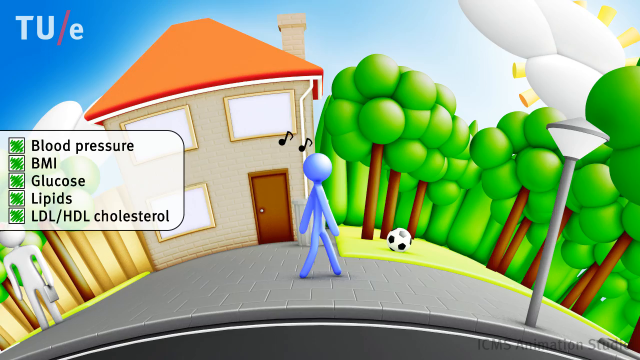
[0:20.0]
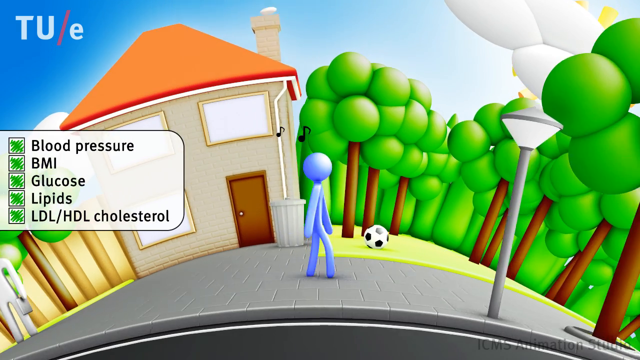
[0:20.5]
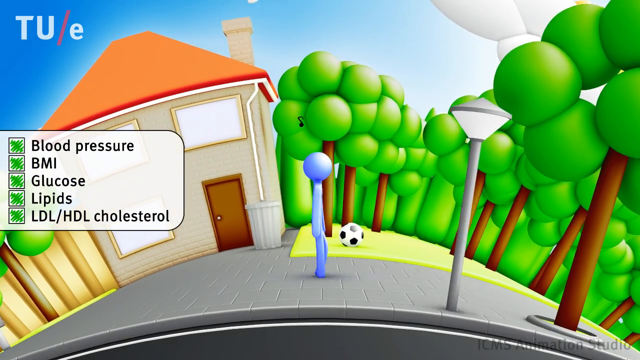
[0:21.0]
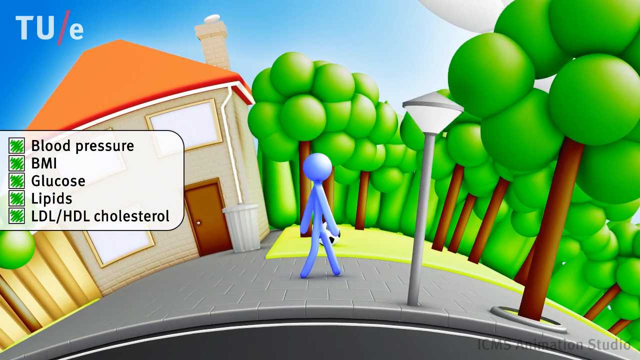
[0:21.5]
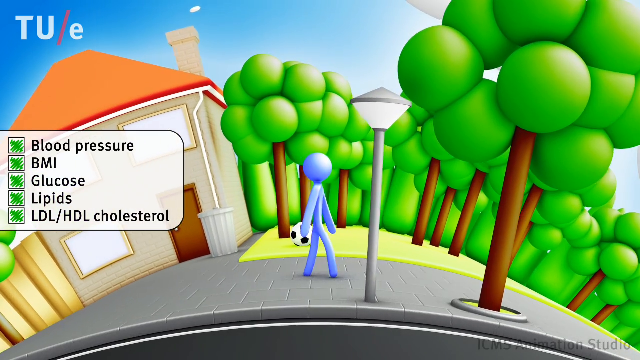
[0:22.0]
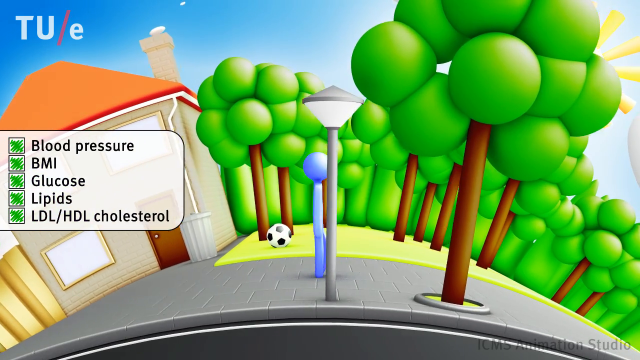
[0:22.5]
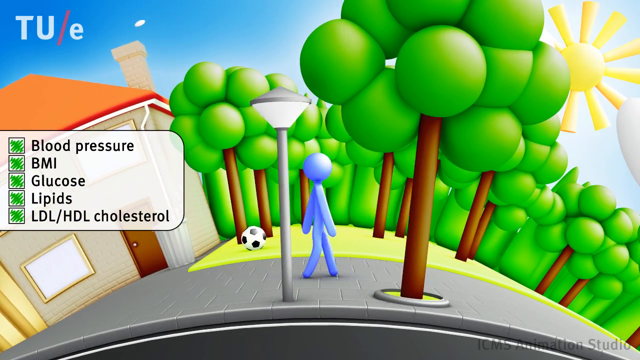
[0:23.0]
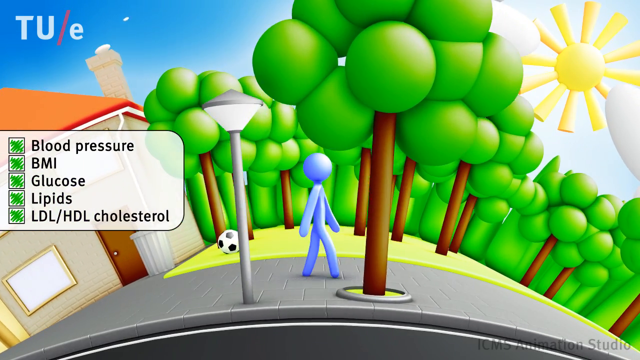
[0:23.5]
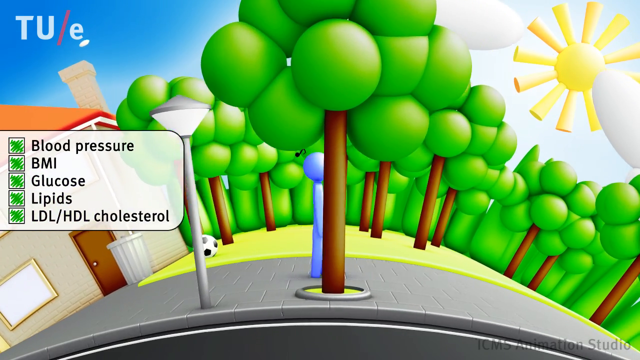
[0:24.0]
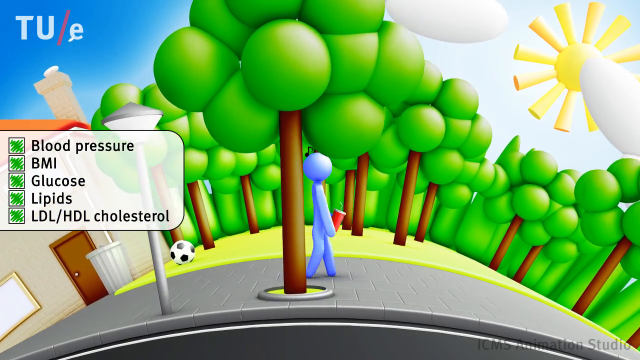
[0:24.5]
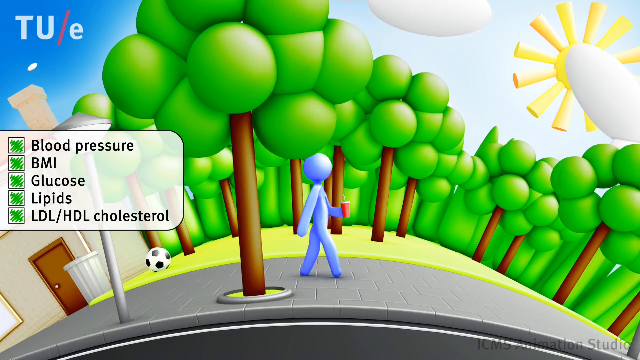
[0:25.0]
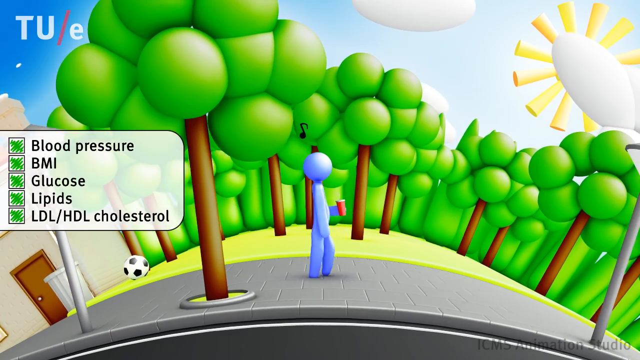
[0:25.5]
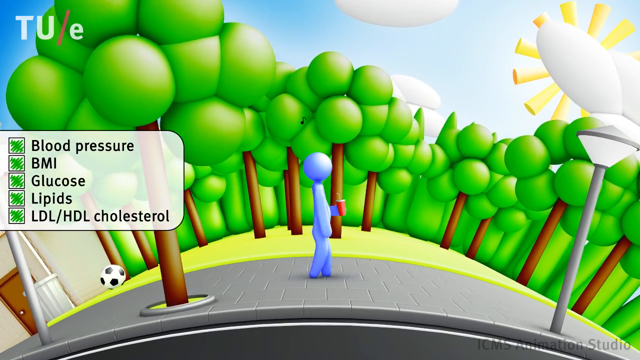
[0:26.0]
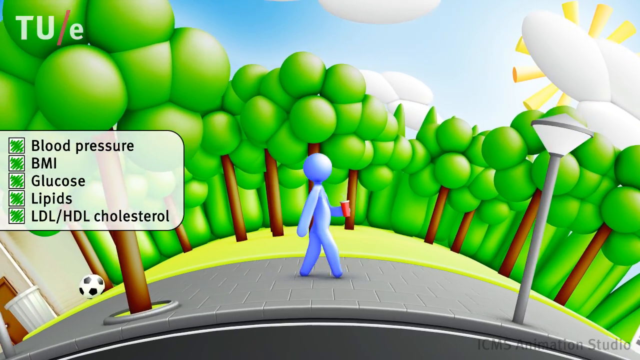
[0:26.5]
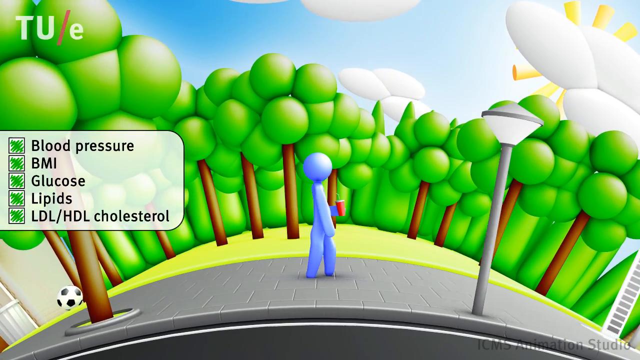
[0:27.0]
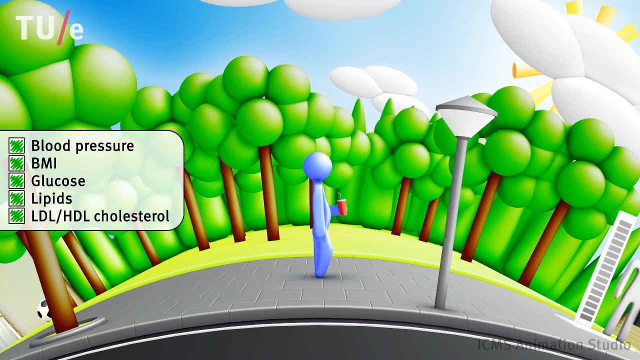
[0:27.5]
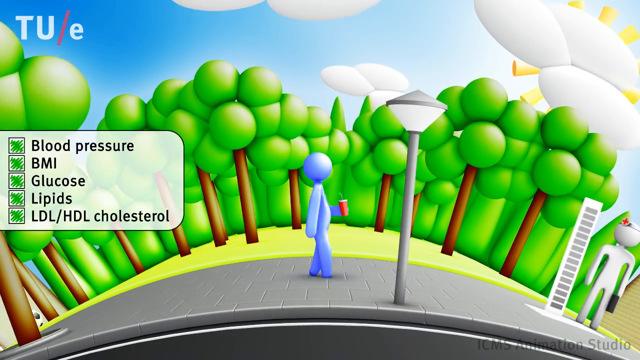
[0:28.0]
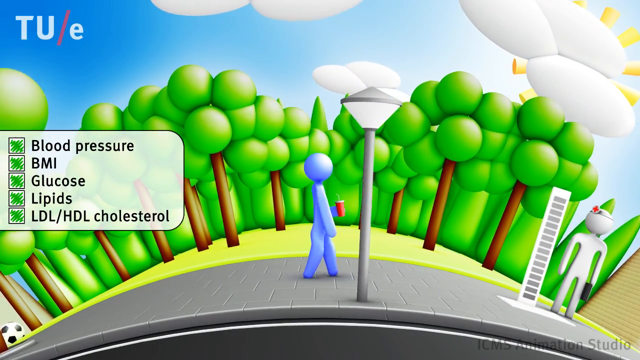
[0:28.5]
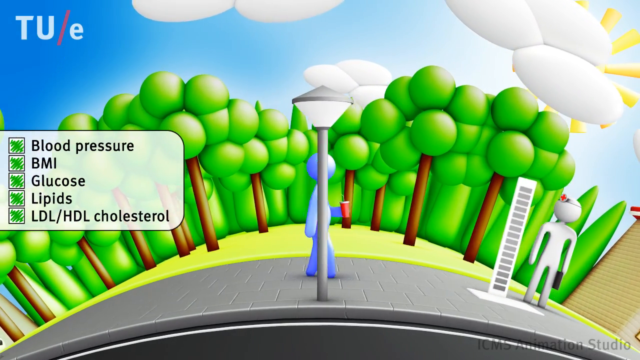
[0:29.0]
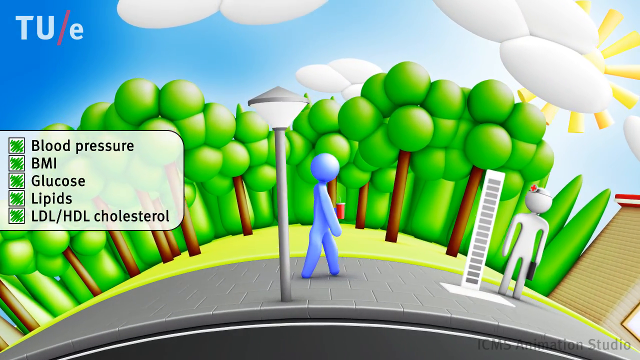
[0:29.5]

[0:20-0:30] A colorful animated scene features a house with an orange-reddish roof and a chimney, lots of trees, a lamppost on the right side, and a blue sky with white clouds. A pale purple humanoid figure walks past a soccer ball and continues behind the trees, singing as he goes, with black musical notes radiating around his head. He holds a red cup in his hand. On the left side are five body measurements: blood pressure, BMI, glucose, lipids, and LDL/HDL cholesterol. The markers to their left are all shaded green, indicating a good status.